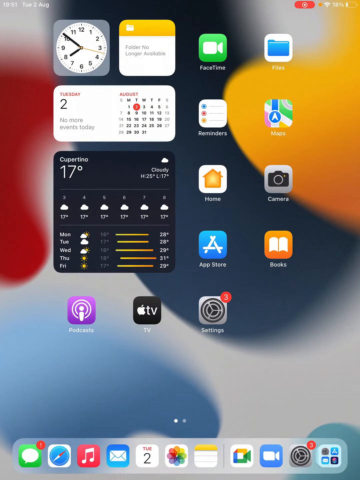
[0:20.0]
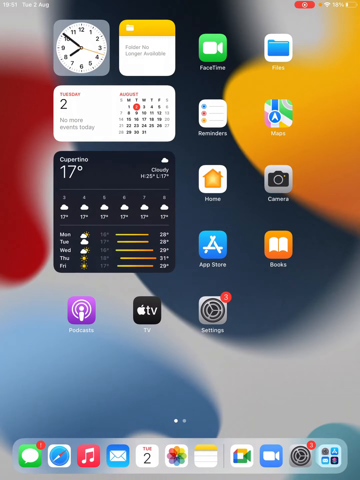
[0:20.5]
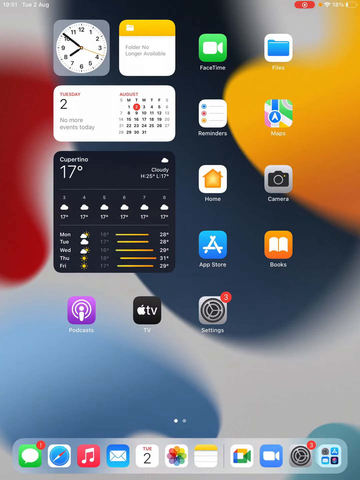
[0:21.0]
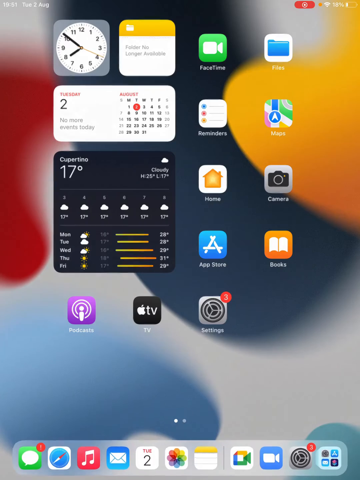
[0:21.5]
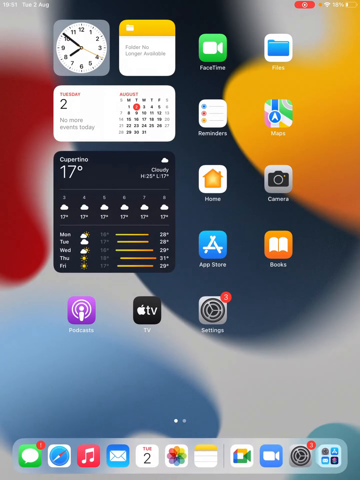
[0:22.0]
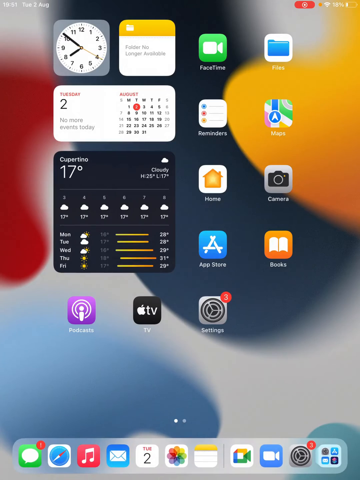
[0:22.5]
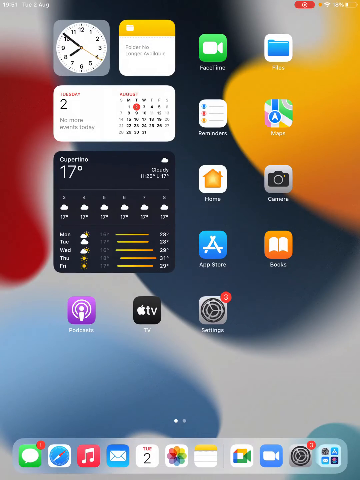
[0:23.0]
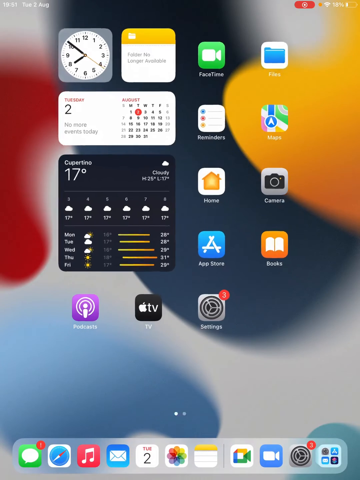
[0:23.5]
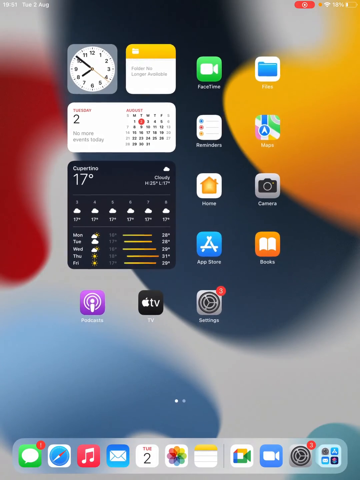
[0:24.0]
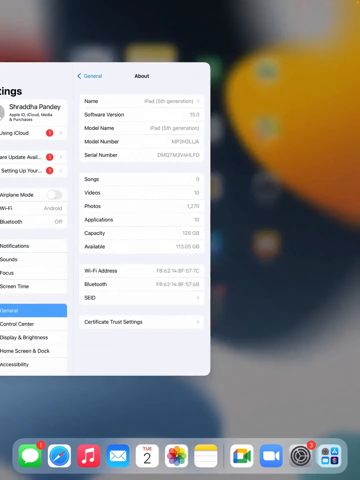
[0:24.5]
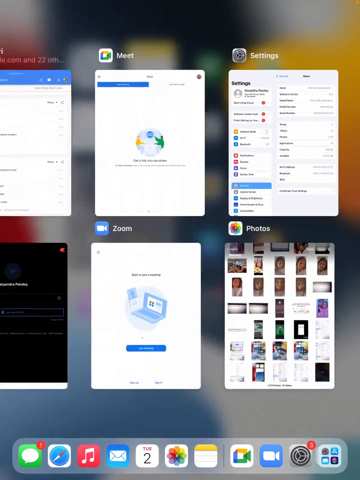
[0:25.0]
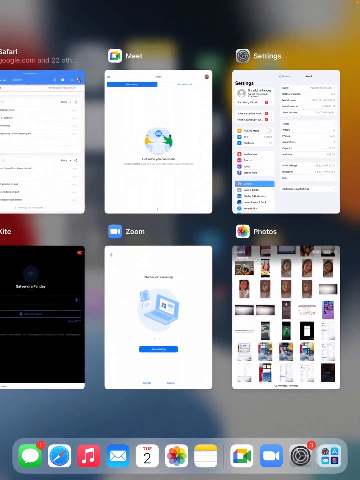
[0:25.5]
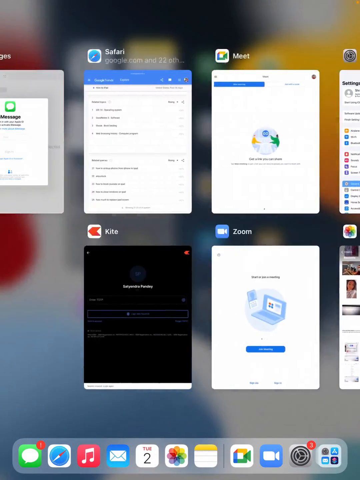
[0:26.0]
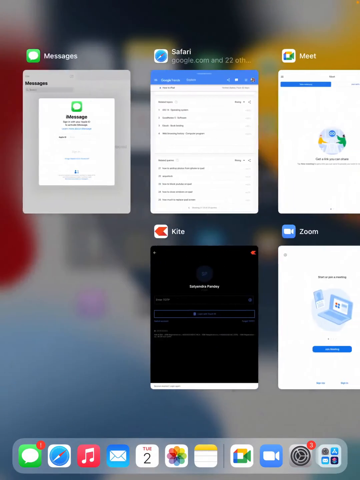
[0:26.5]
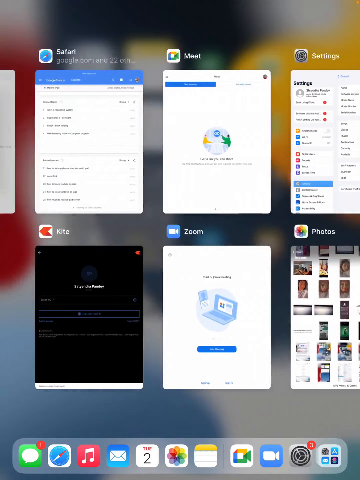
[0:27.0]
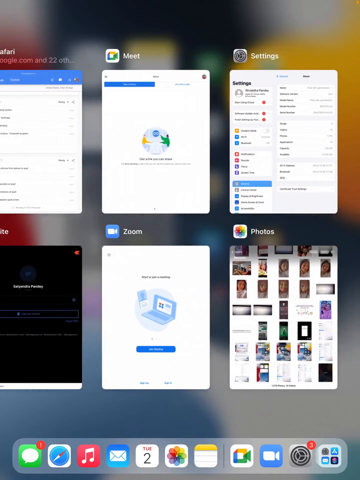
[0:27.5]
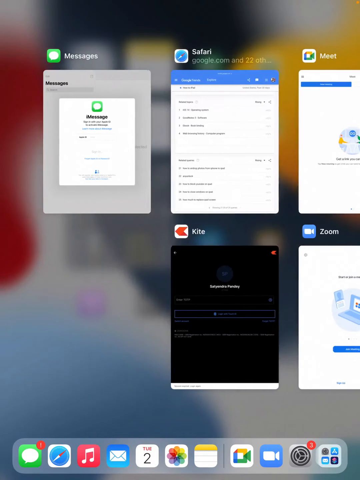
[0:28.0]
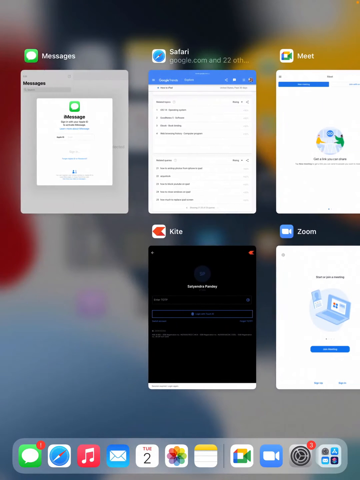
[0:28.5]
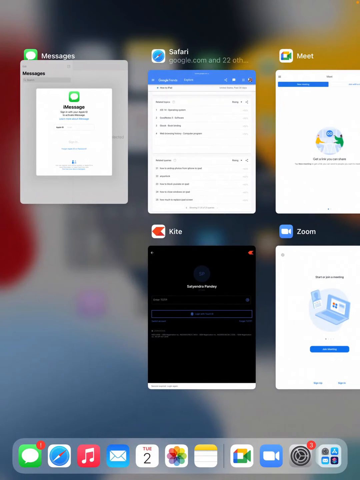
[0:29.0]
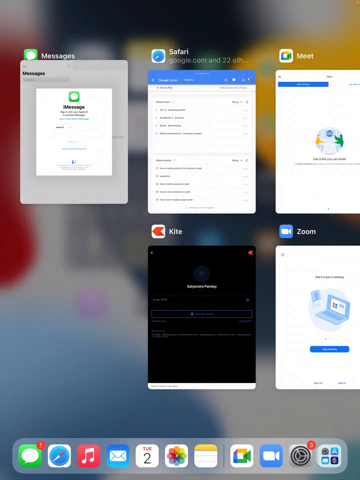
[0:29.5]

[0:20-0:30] On the same screen, all the apps zoom out slightly and a set of six windows appears, three at the top and three at the bottom. The windows scroll to the left, then back to the right, and back to the left again. They can only scroll over by one, revealing a fourth window in the top row, while the bottom row has a blank space instead of a fourth window.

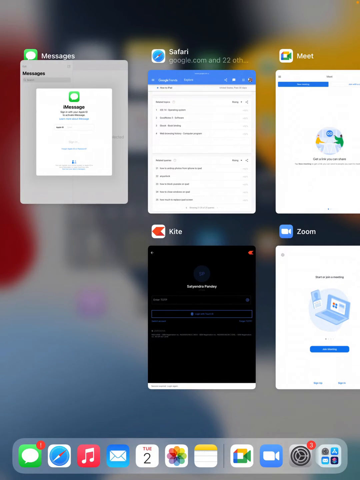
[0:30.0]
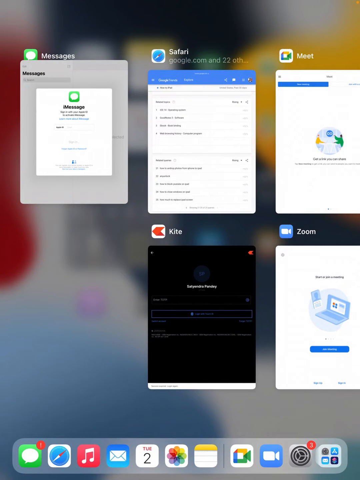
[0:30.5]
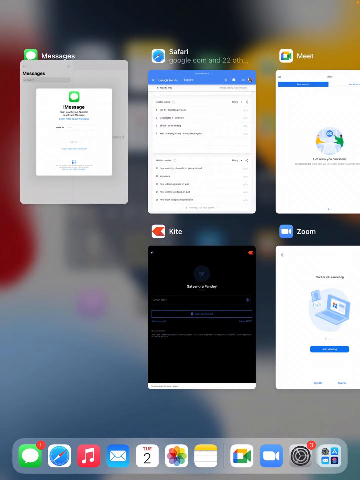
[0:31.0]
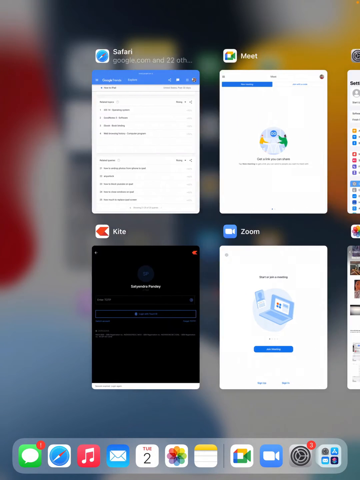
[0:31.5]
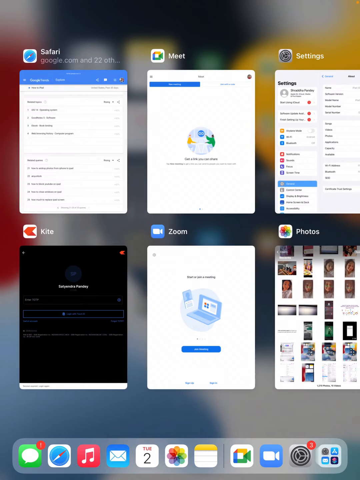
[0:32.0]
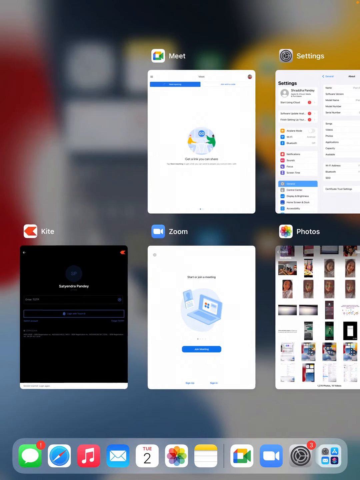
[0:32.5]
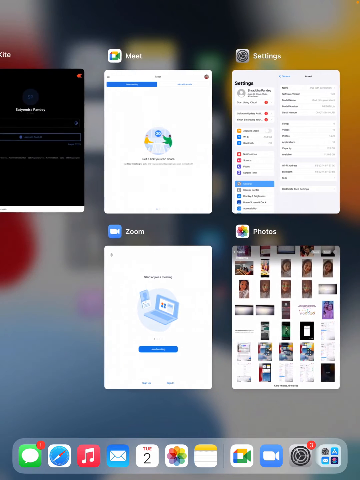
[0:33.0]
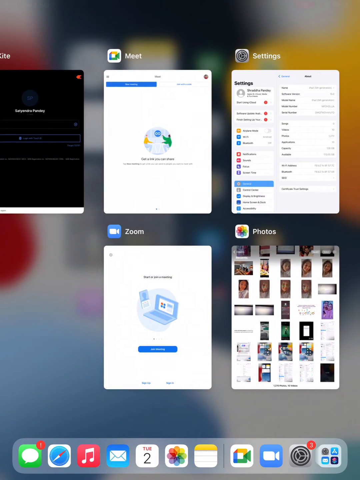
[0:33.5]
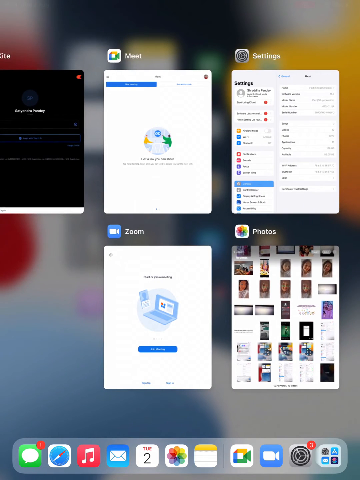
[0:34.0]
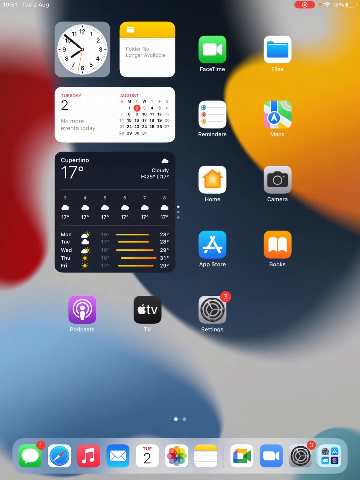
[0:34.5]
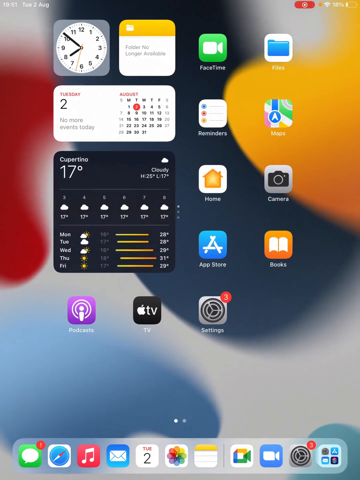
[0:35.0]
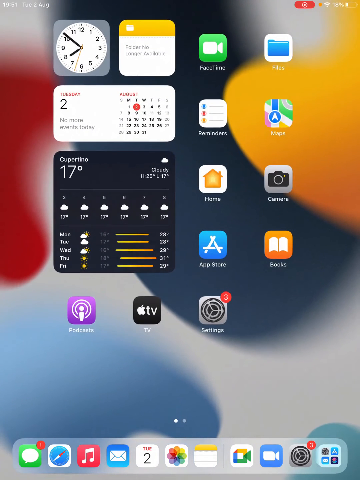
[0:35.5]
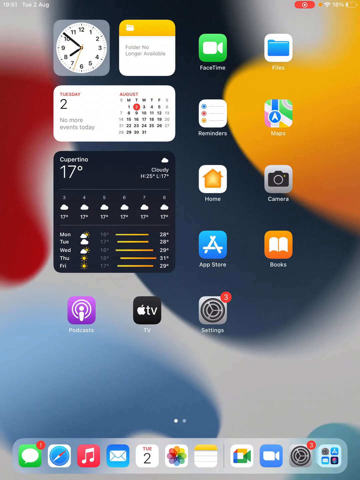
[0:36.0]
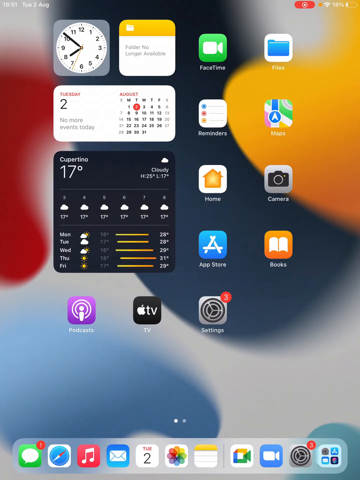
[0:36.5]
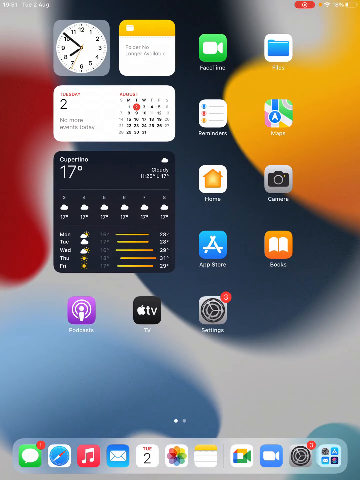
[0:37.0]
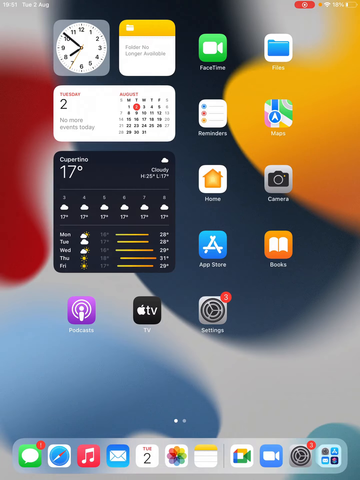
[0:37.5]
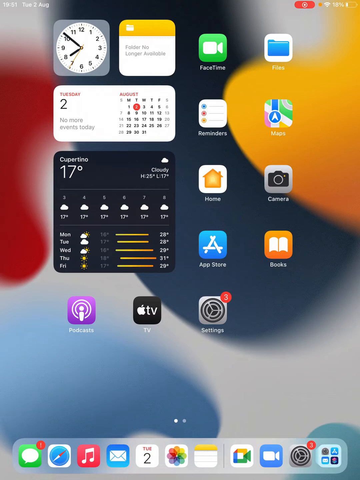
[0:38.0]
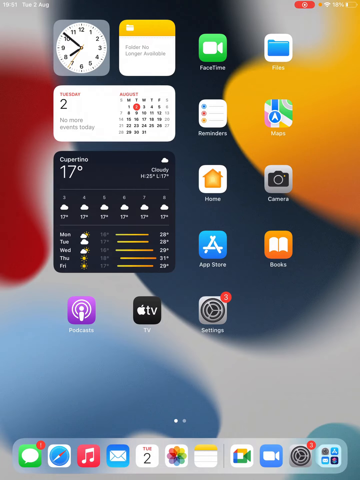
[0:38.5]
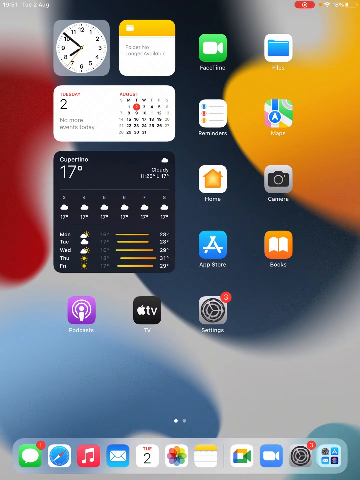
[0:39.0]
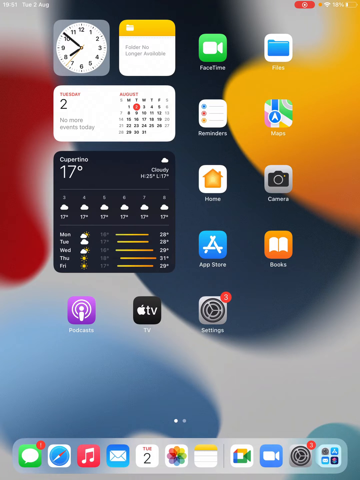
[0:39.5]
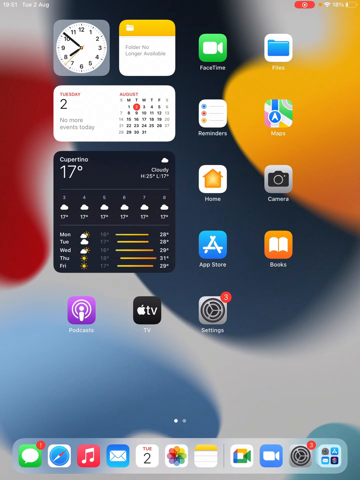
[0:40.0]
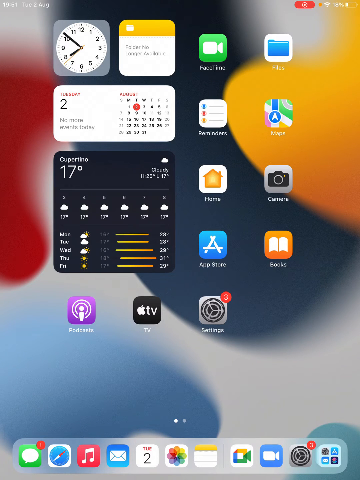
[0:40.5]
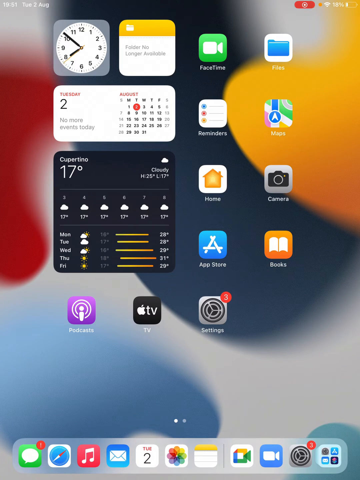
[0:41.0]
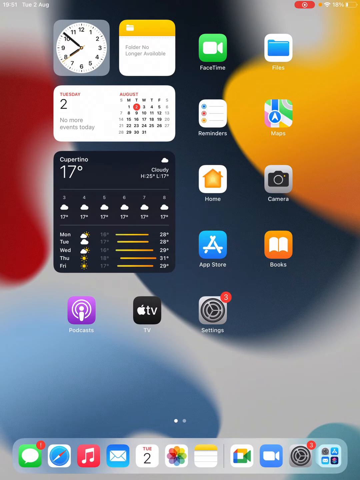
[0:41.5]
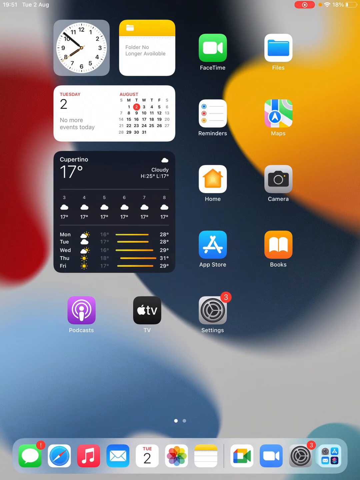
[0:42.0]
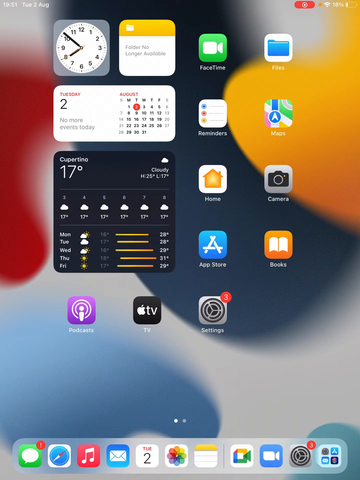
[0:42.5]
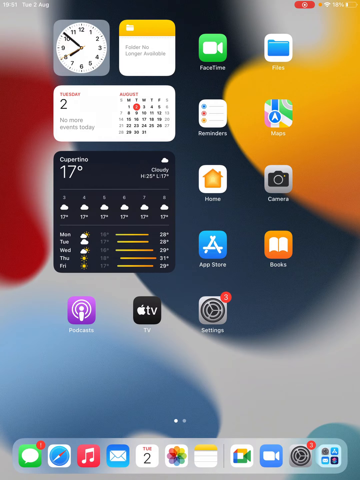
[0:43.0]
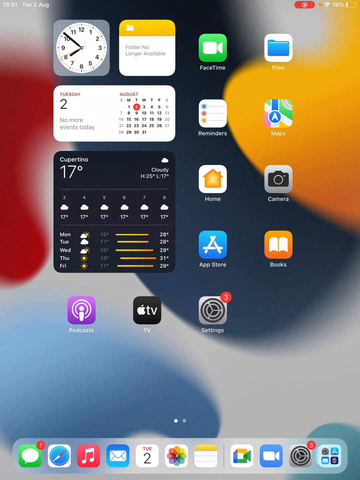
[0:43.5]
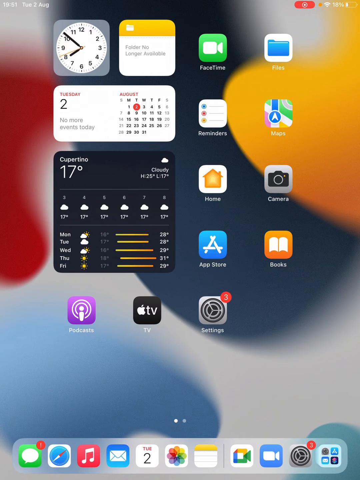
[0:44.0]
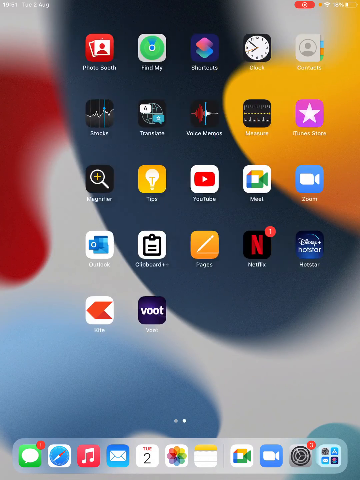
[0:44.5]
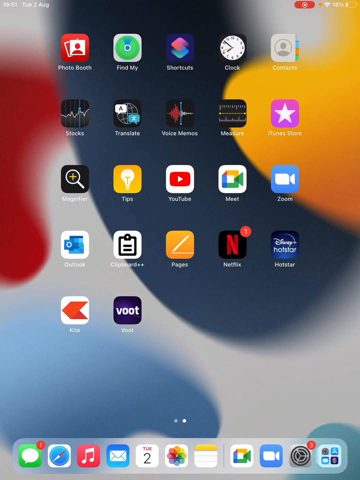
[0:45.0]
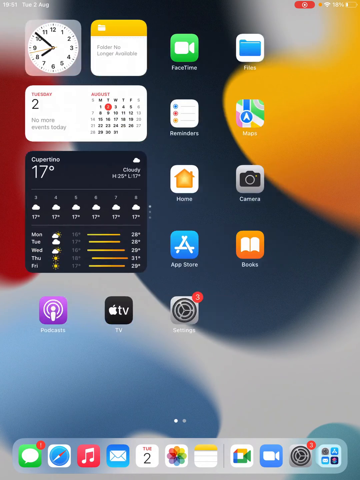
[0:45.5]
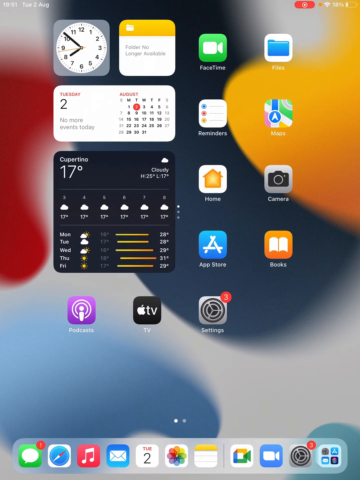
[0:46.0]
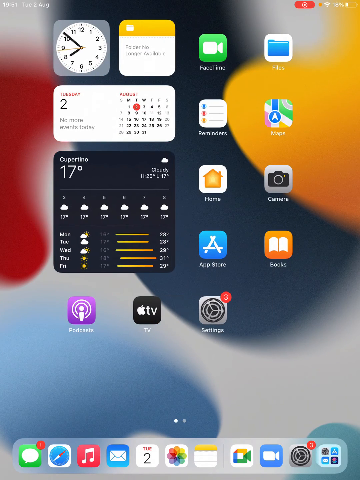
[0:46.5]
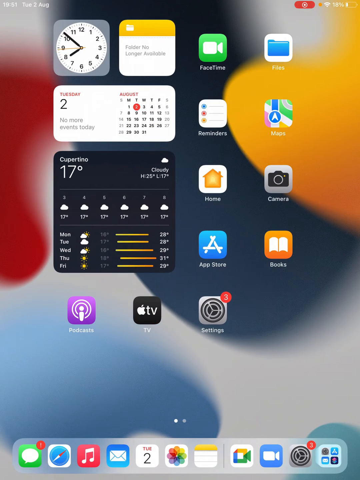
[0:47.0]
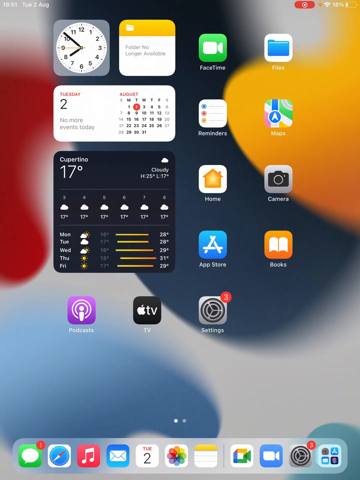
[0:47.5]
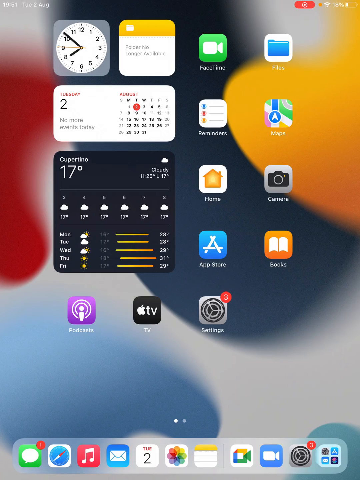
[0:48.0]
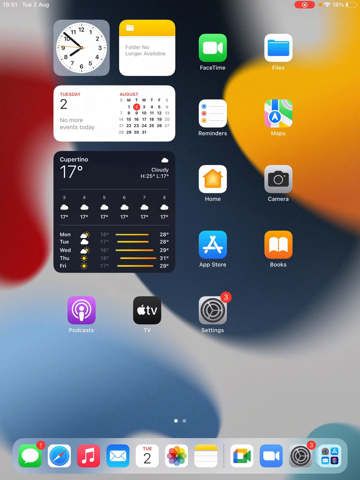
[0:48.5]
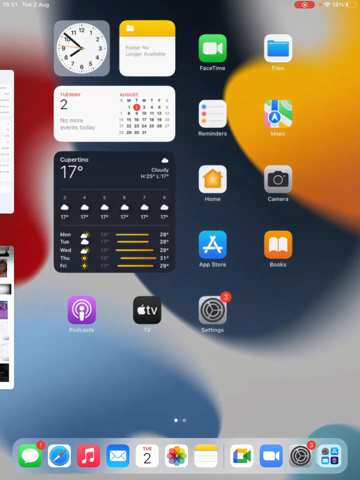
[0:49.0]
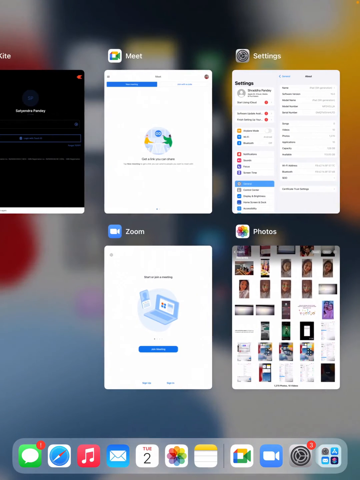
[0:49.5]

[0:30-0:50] The window in the very top left, labelled "messages" above it, appears to be swiped up and disappears, and the remaining windows shift to the left. The window now in the top left, labelled "Safari" above it, is swiped up and removed, and the window below it moves up into its place. The view then returns to the main screen with all the apps, which stays on screen for a few seconds. The person swipes to the right, showing all the original apps, then it swipes back to the left to the apps just viewed. The windows are brought up again, showing the five remaining windows.